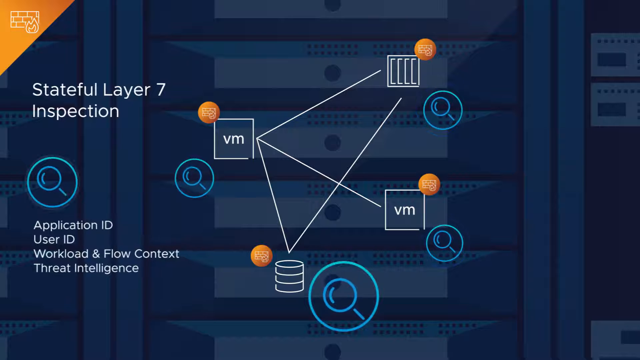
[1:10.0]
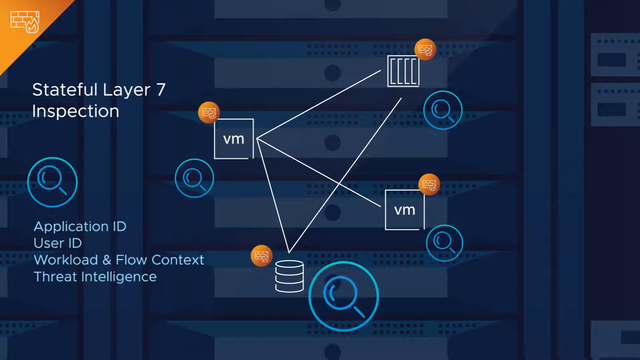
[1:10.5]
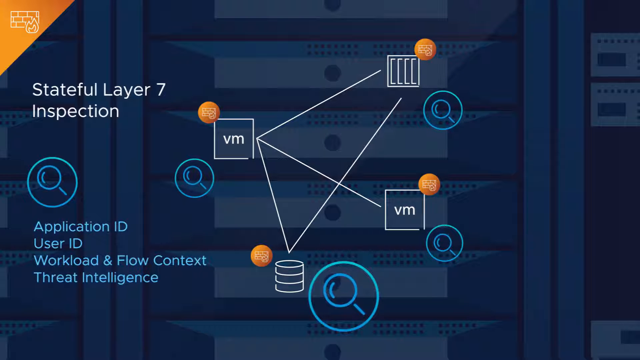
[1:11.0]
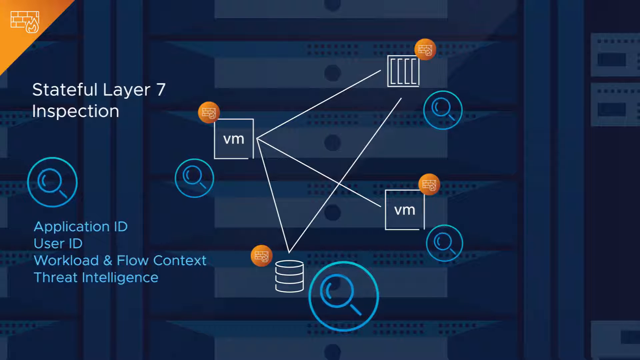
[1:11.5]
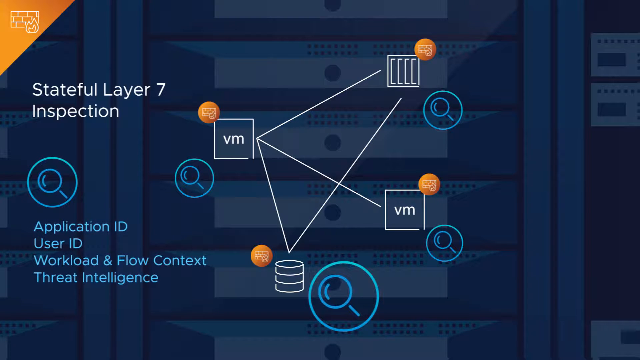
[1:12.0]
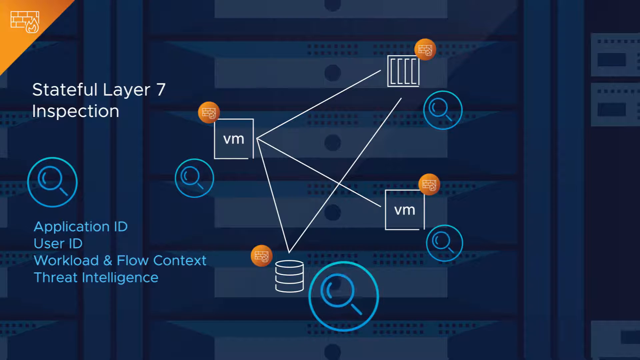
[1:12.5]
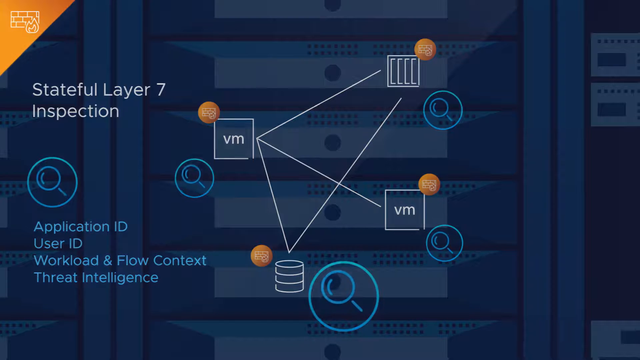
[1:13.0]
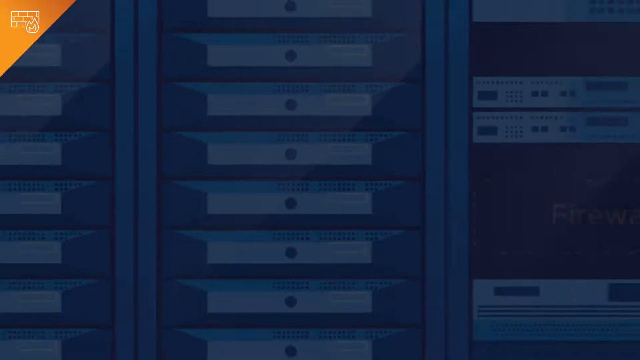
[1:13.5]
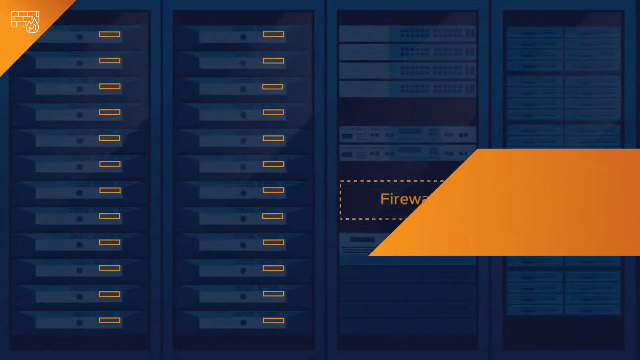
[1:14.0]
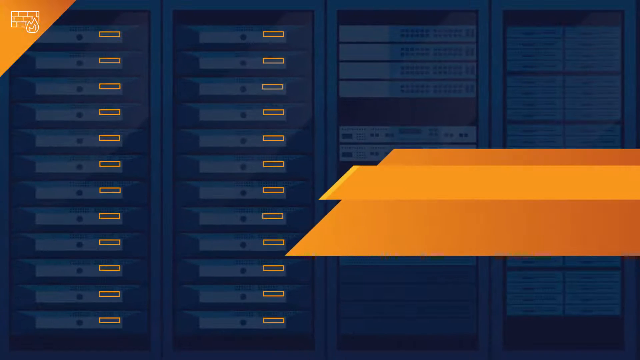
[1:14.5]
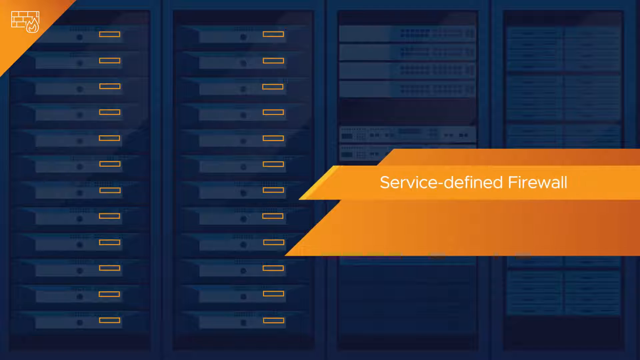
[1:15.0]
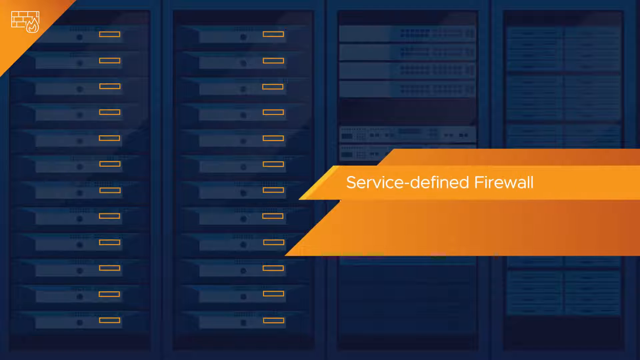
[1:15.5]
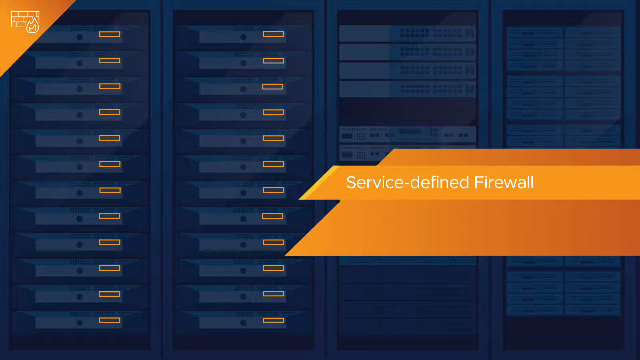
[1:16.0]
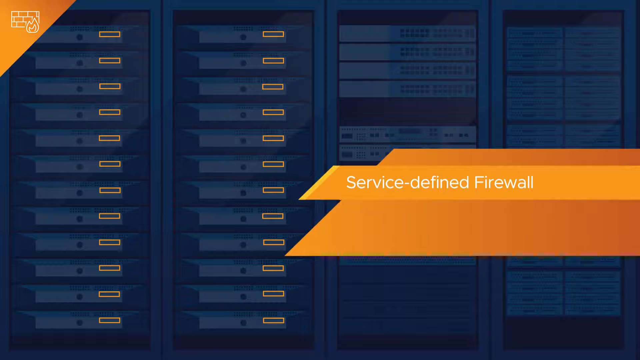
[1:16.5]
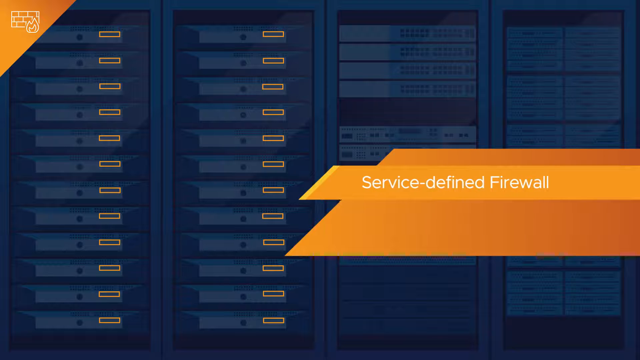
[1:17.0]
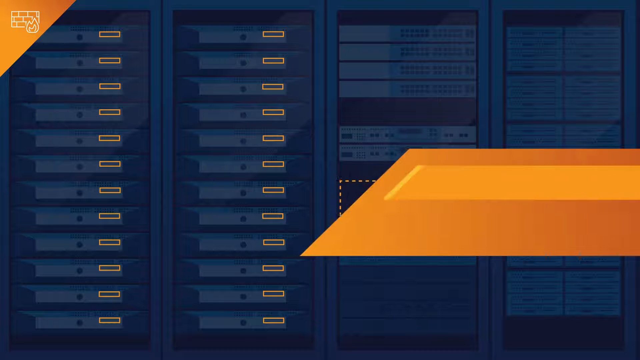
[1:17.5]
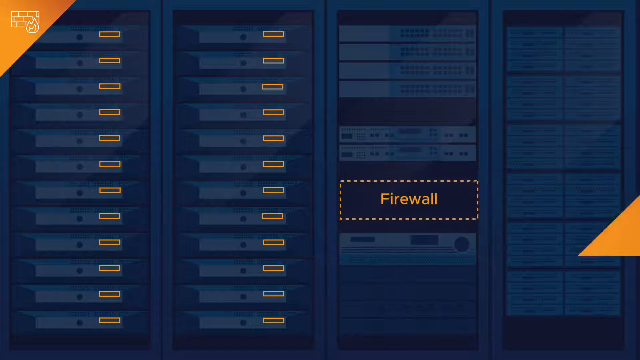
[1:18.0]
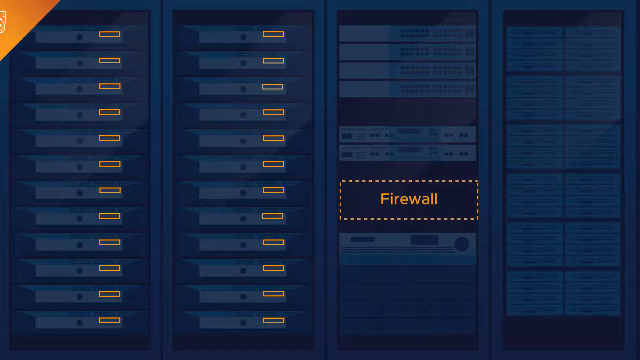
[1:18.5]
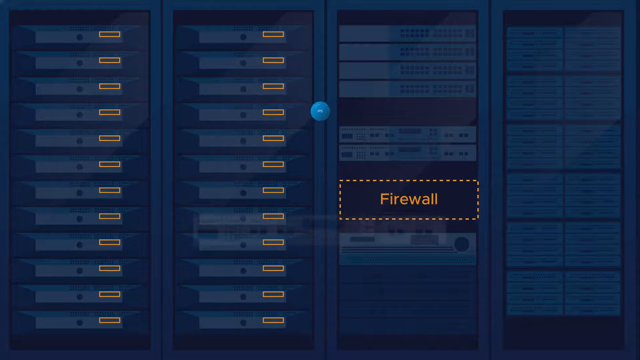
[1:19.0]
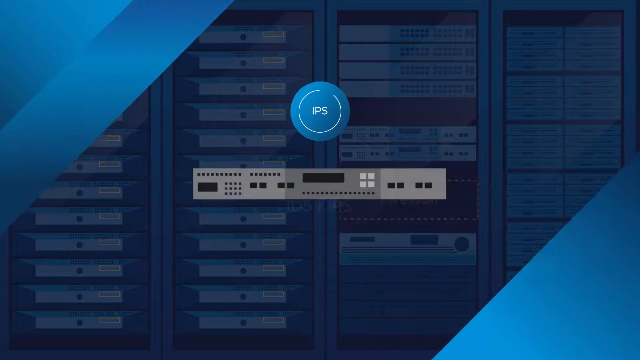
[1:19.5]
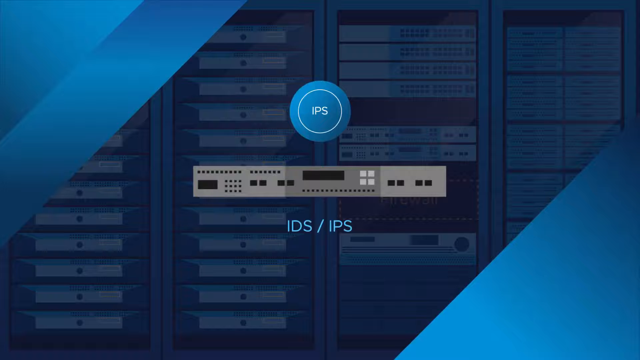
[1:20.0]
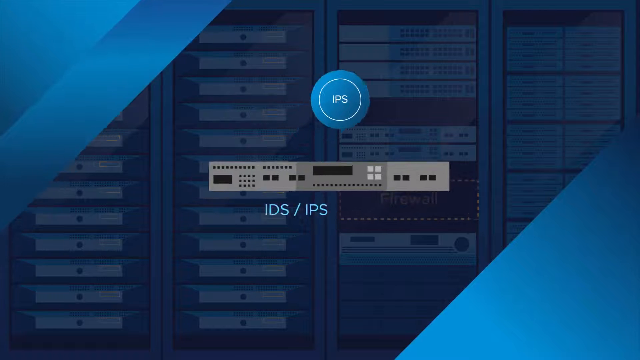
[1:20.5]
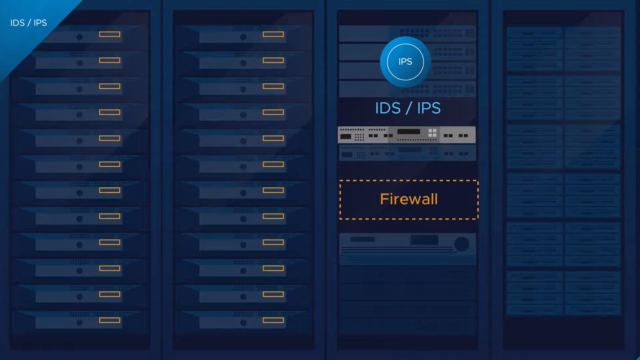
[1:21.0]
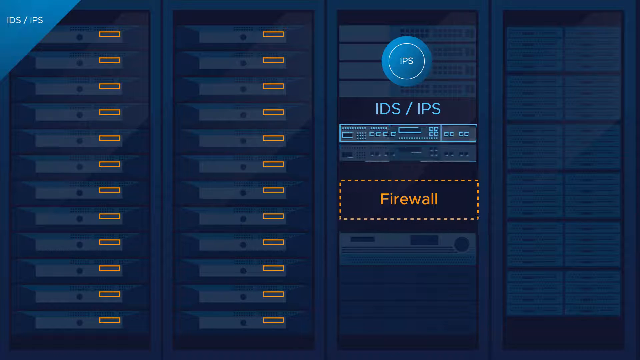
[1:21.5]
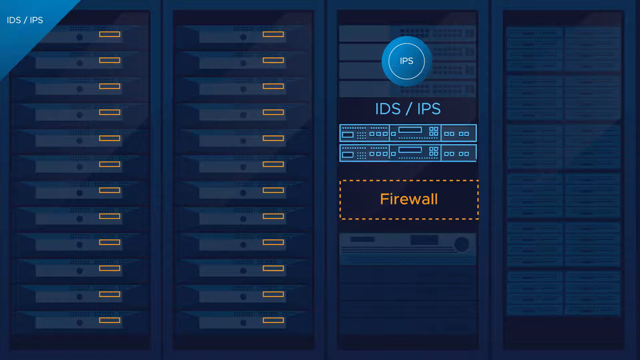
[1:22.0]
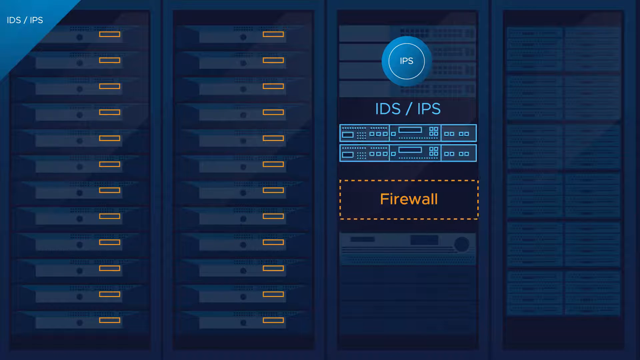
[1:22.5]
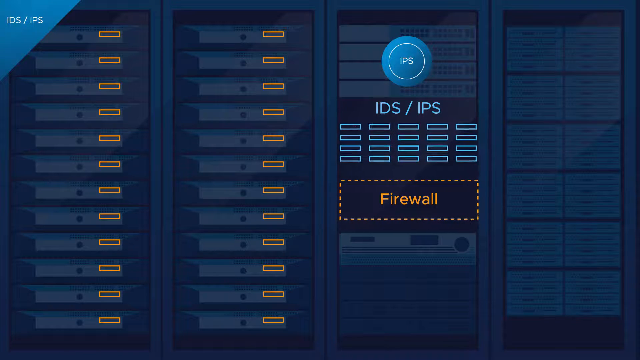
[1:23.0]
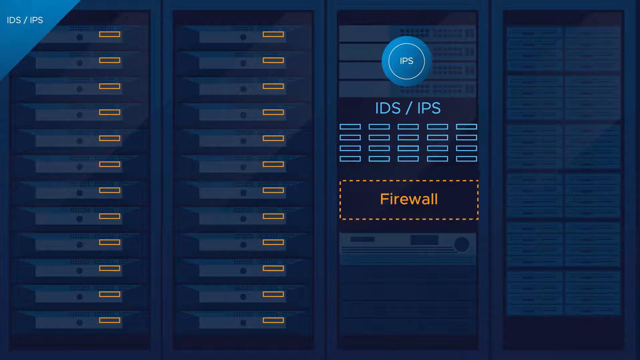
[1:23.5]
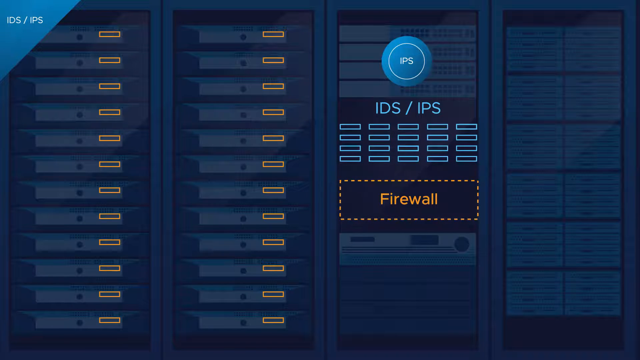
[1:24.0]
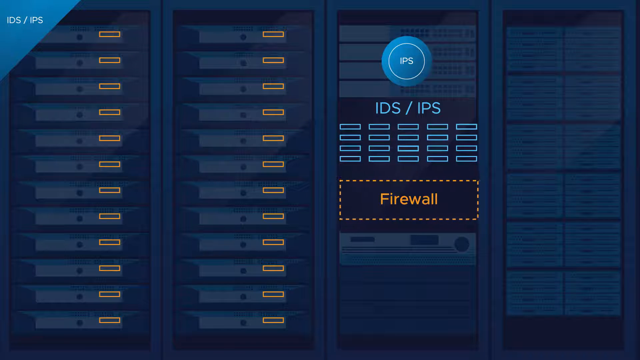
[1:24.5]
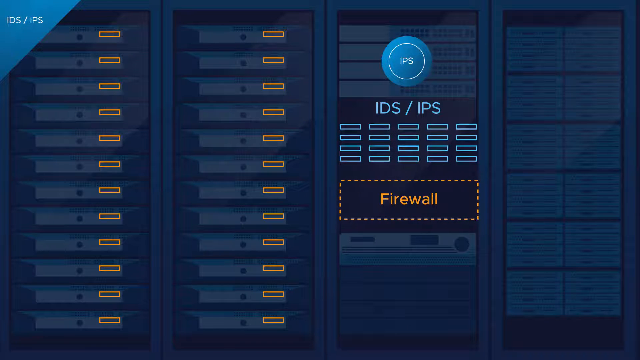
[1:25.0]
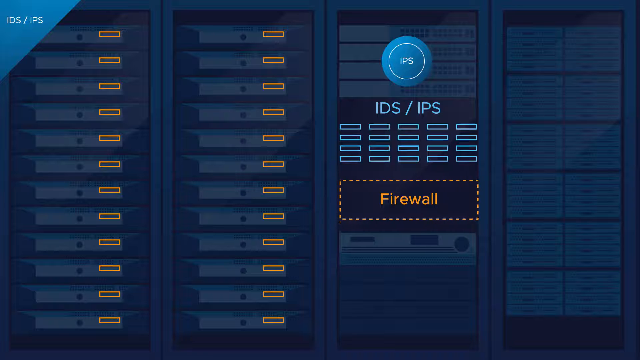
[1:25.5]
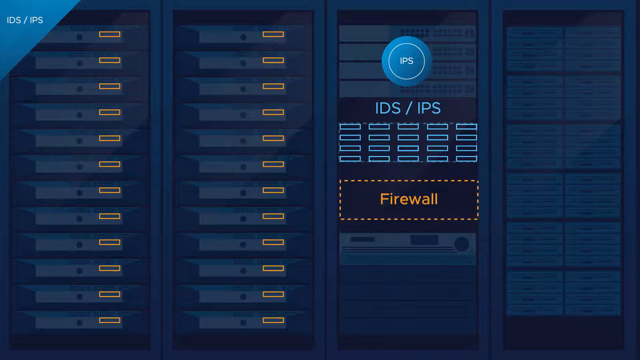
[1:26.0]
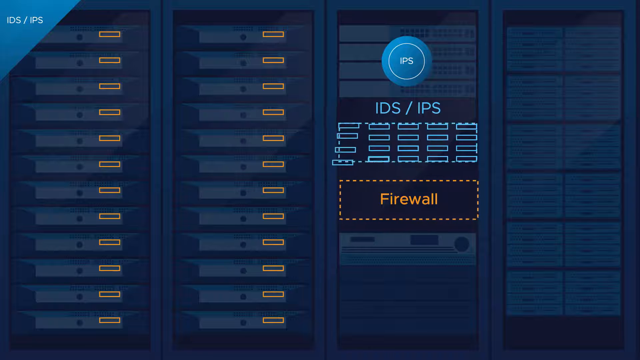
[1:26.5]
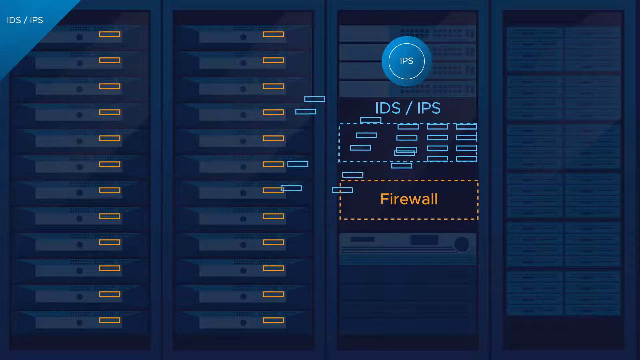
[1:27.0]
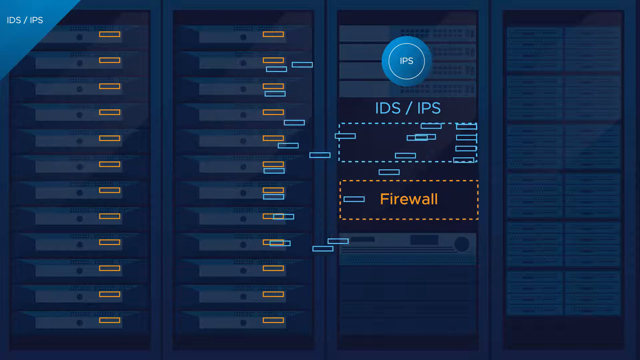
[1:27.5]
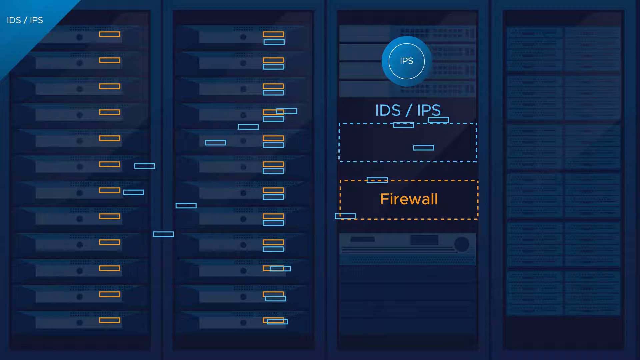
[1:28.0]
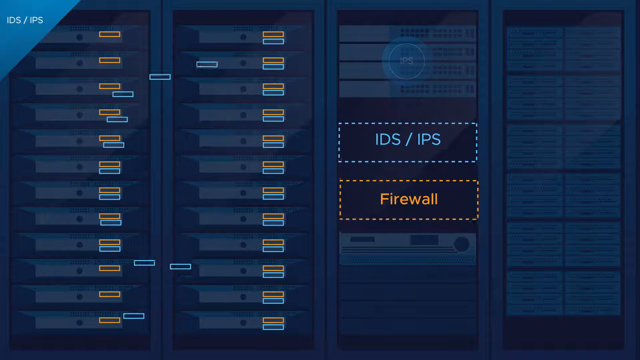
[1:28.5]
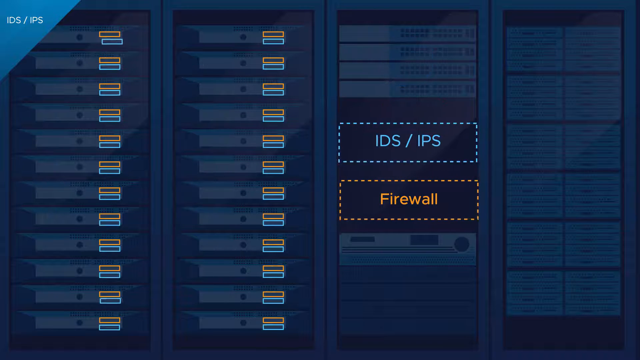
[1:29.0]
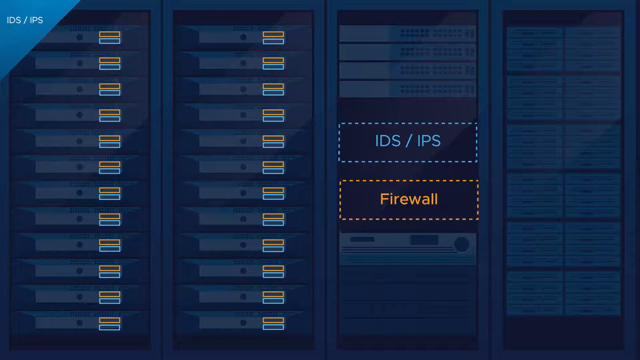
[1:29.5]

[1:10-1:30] The firewall logo is in the upper left corner, with the newer racks bearing orange rectangles and the older racks still in the background. Something orange shoots in from the right side toward the left, and "Service D" appears, hanging for a second as if the video stuttered, before the full text "Service Defined Firewall" pops up. The display then switches to an ISP, shown with a circle, and two new racks are added above the firewall on the right side. In the upper left there is now a blue rectangle reading "IDS ISP". Blue squares or rectangles are created and placed underneath the firewall ones on the new server racks on the left side, two on the left.